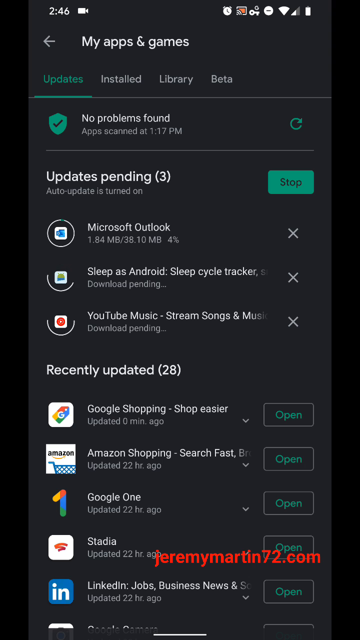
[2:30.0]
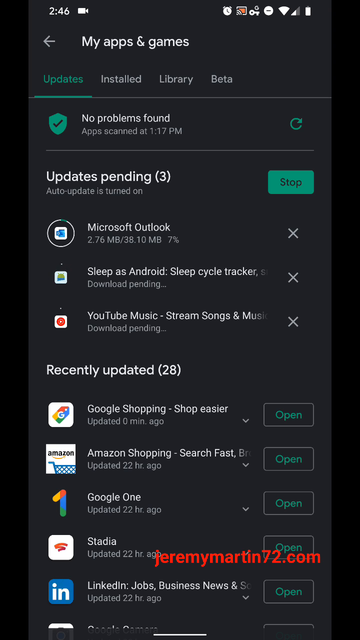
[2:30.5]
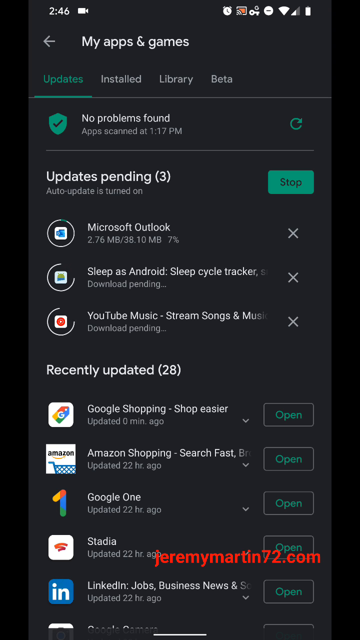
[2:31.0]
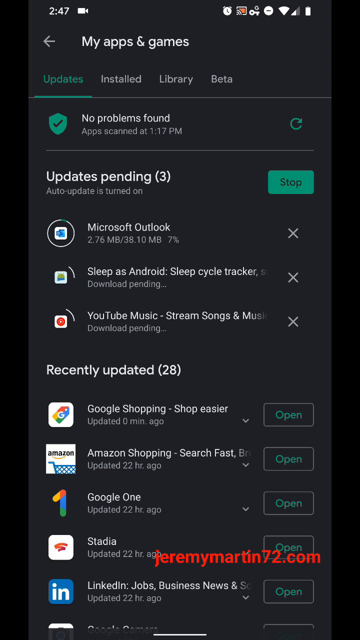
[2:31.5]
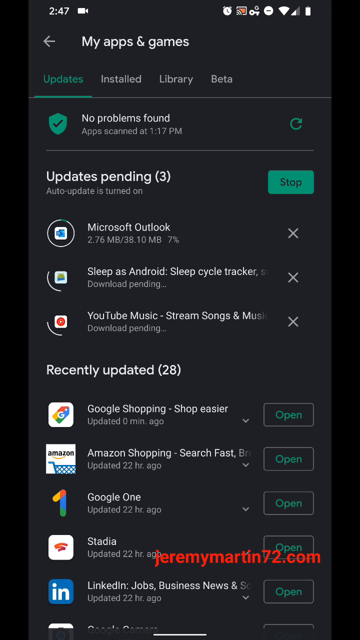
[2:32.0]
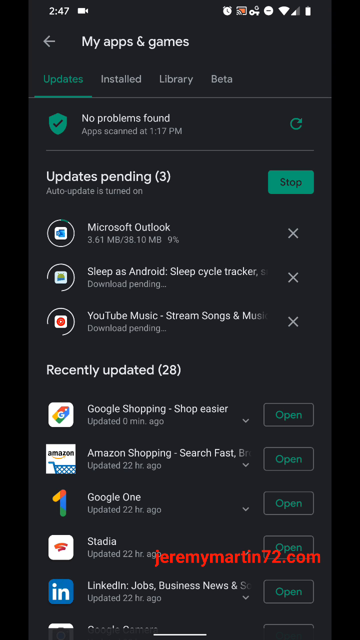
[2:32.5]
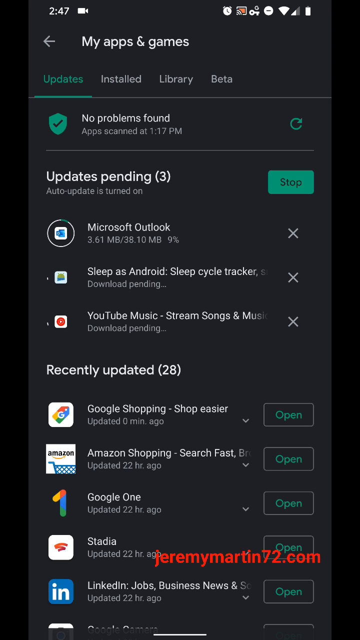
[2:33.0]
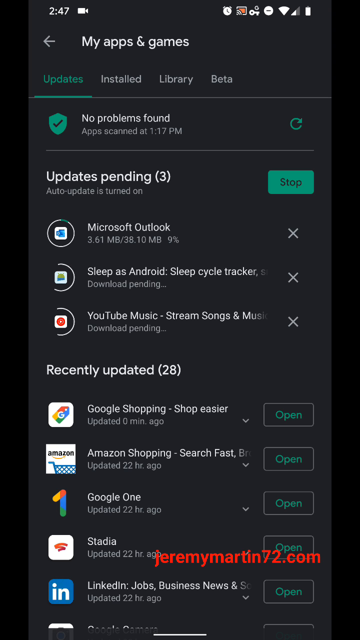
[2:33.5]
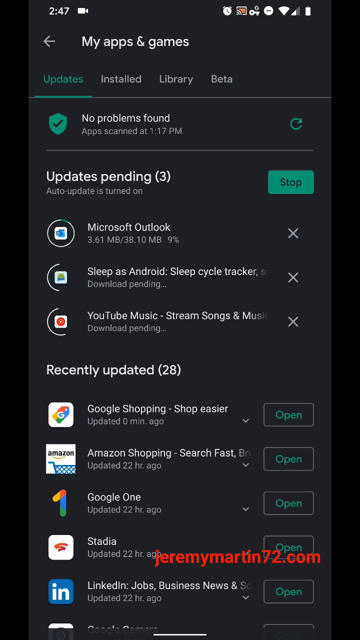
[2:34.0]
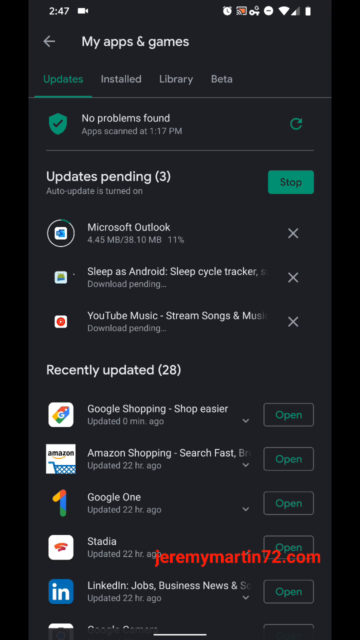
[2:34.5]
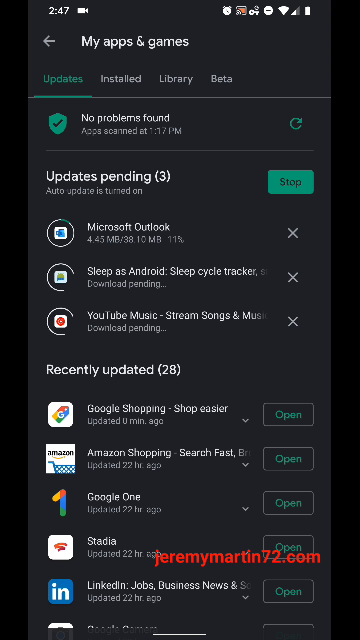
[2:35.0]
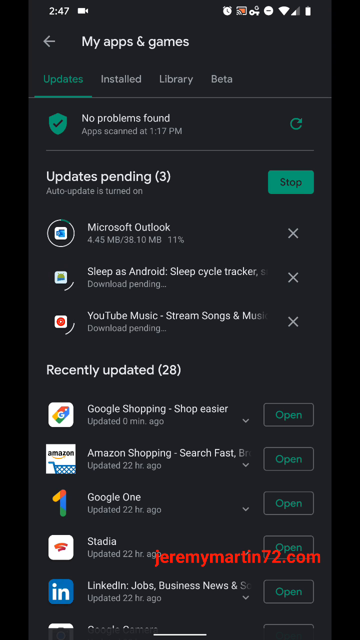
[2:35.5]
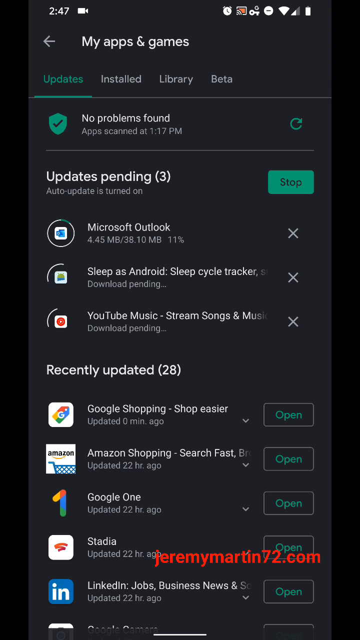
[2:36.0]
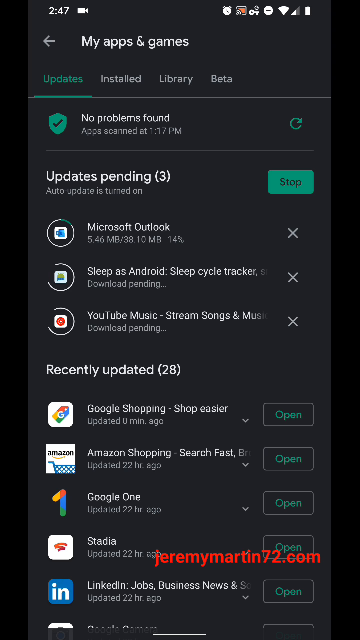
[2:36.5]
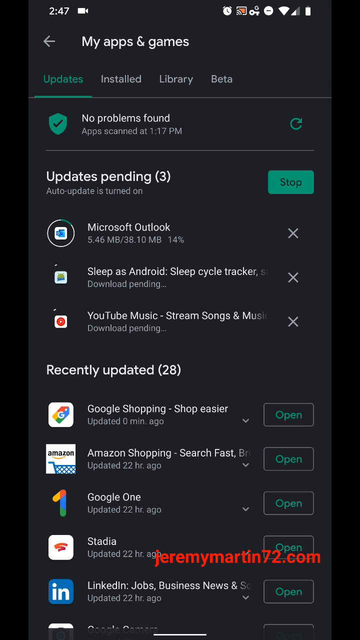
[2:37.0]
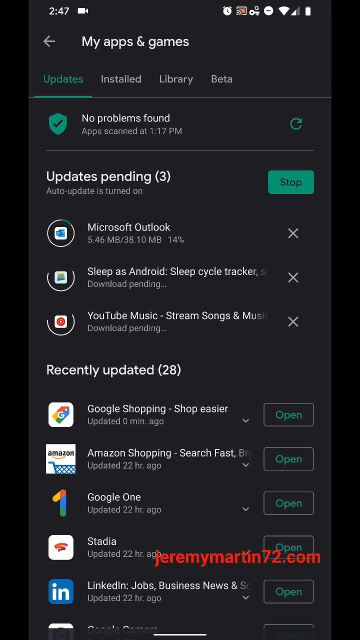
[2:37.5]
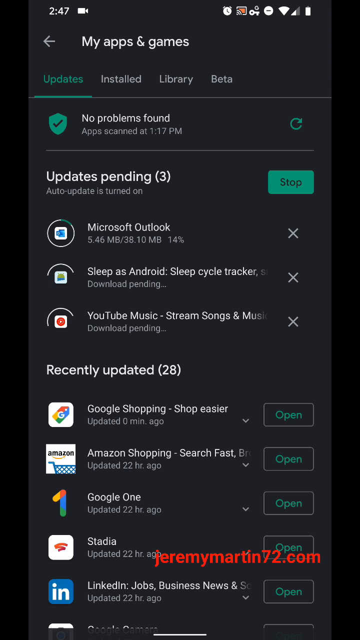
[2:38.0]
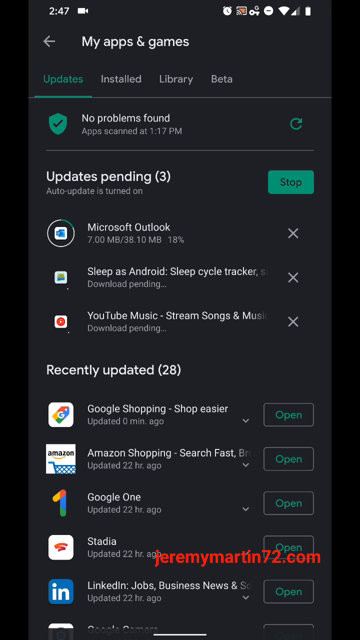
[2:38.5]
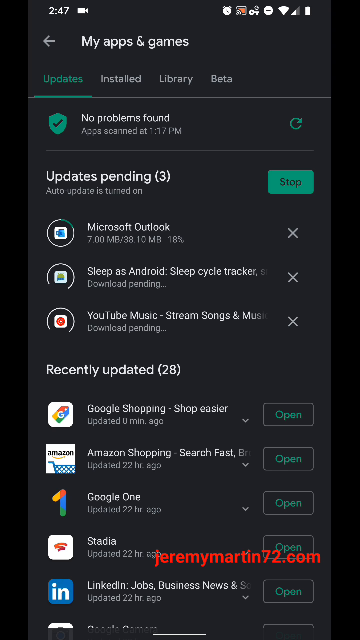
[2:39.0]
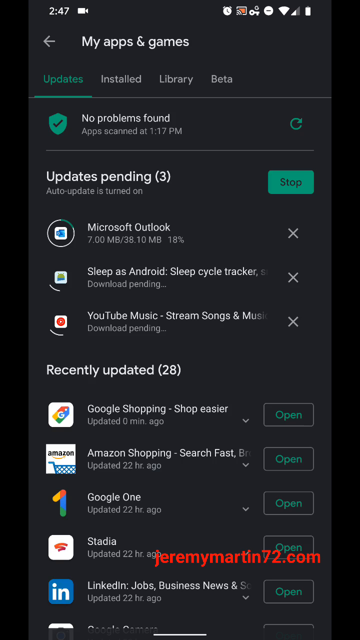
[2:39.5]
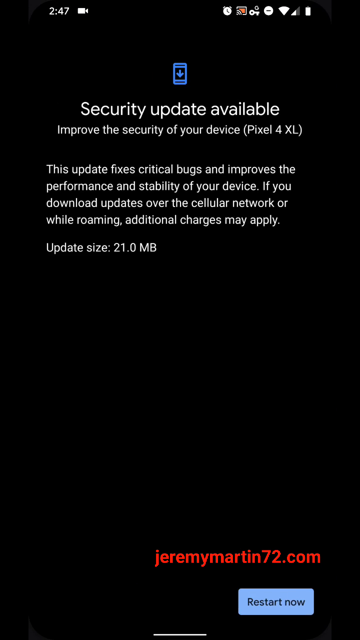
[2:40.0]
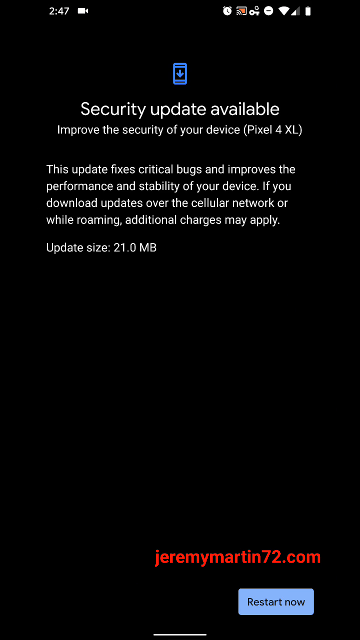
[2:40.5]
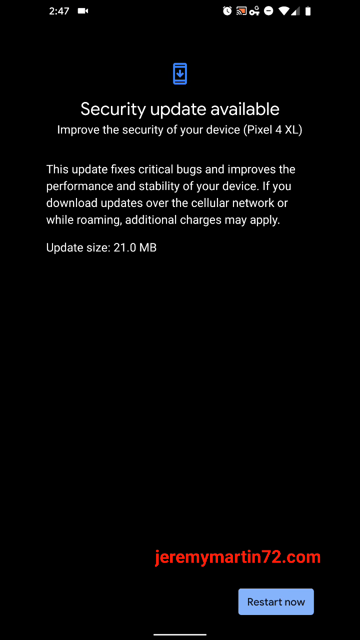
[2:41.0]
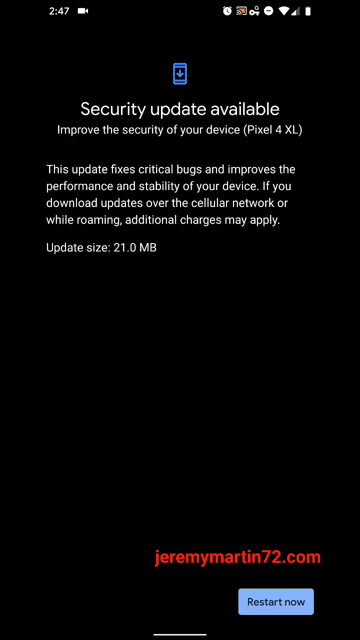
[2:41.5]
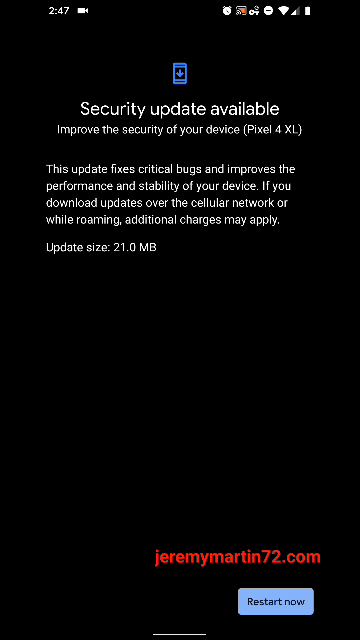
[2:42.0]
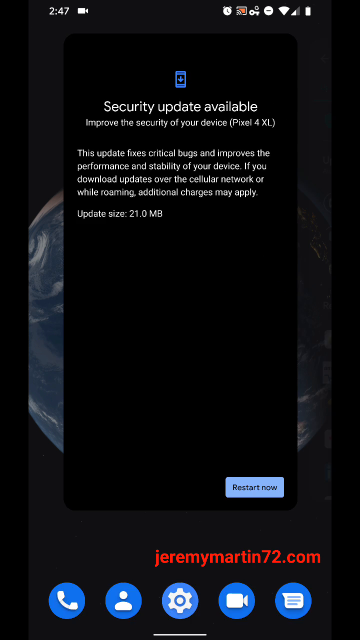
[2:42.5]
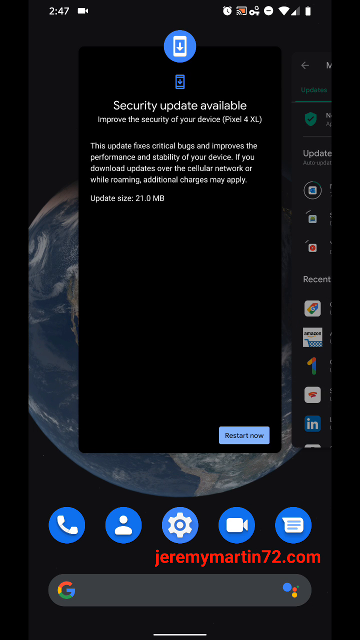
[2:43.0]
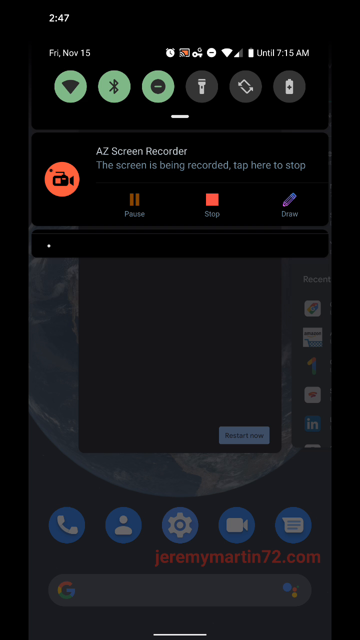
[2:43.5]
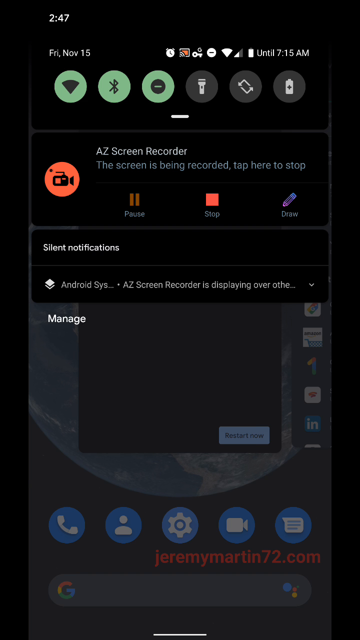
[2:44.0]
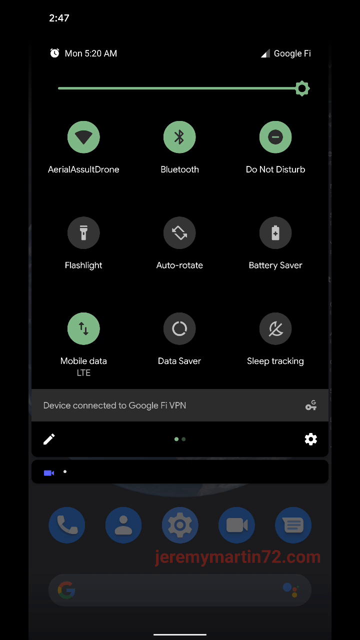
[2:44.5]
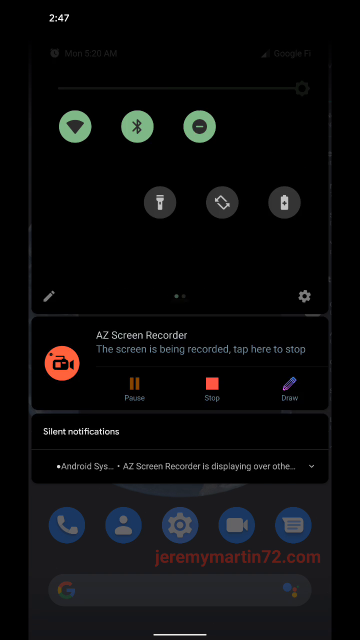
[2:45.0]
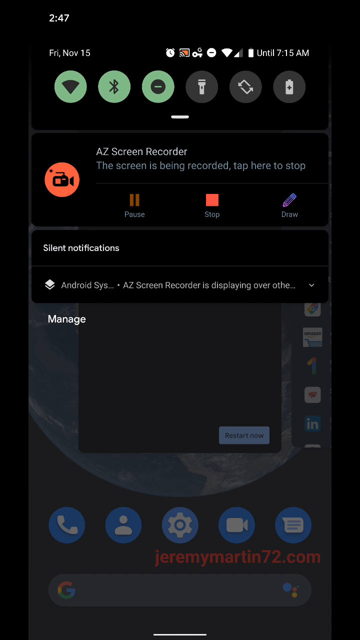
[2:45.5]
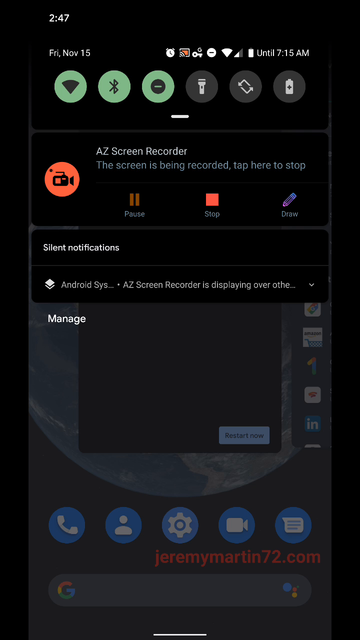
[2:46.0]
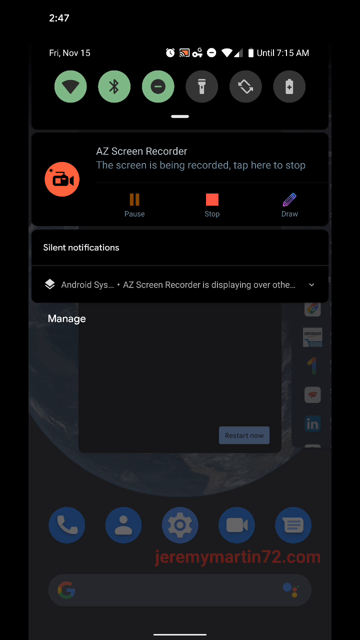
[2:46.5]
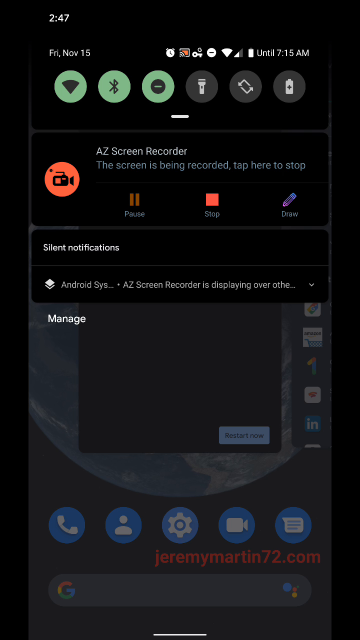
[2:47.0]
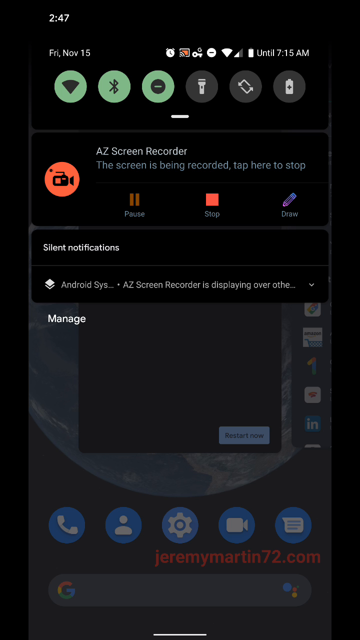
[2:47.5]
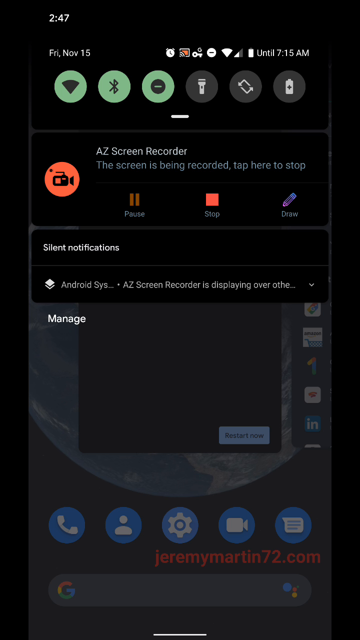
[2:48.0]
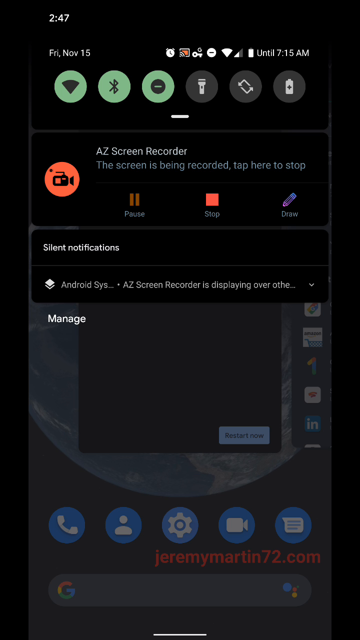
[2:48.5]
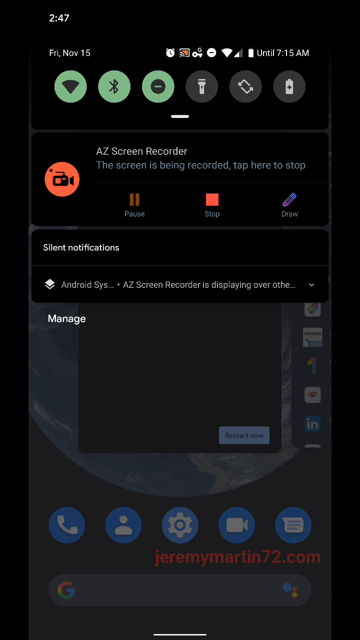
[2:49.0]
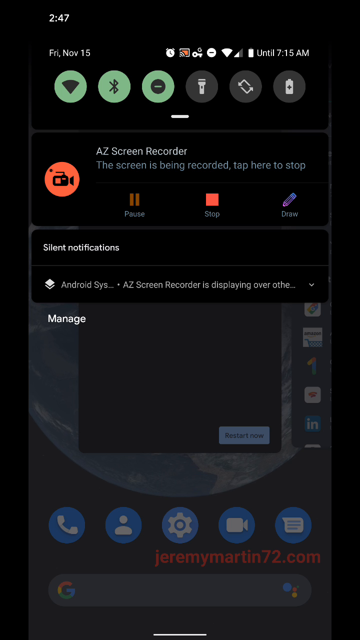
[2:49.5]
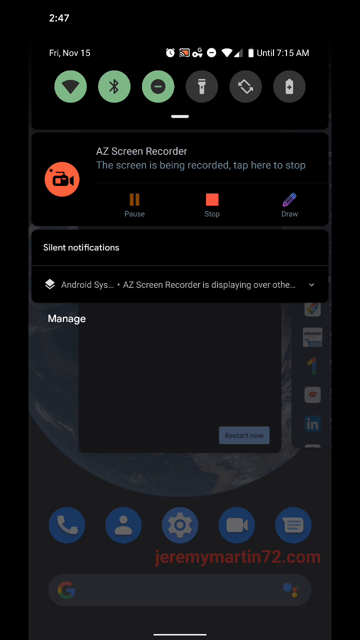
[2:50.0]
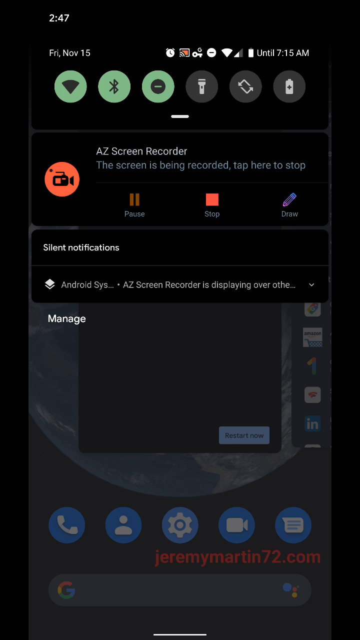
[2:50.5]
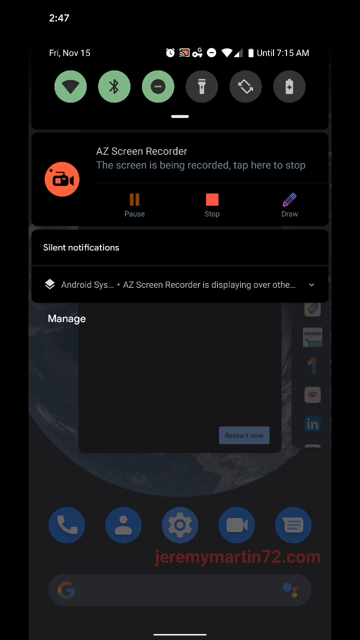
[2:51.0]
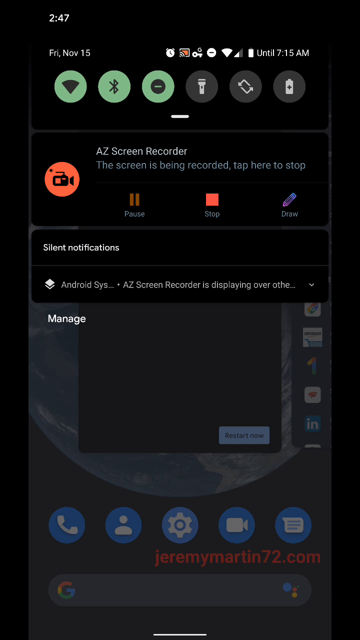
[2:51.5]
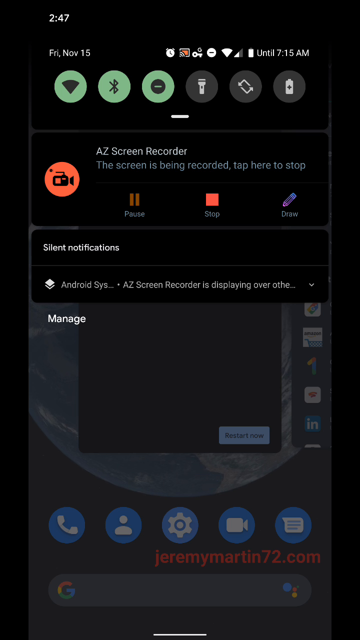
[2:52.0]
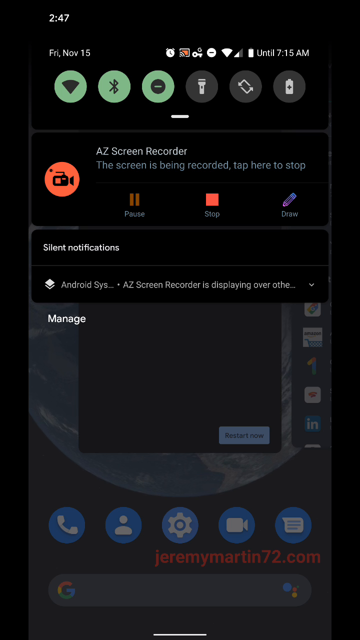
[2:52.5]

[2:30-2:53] The My apps and games screen stays up while the apps update; the updates pending now number three, and the app being updated most recently is Microsoft Outlook. The user navigates back to the security update available screen, then swipes up to bring back the windows and tabs screen, leaving the update screen hovering without bringing it full size. They then swipe down to reveal the settings and options of the phone or device: Wi-Fi and Bluetooth are enabled, along with another option that is not recognizable, and there are a flashlight, automatic rotate or landscape mode, and a battery icon in gray and white. AZ Screen Recorder is shown as active, with options to pause, stop or draw. The user swipes down further to expand the settings section and reveal other icons, then collapses it and hovers over the screen with the AZ Screen Recorder information.